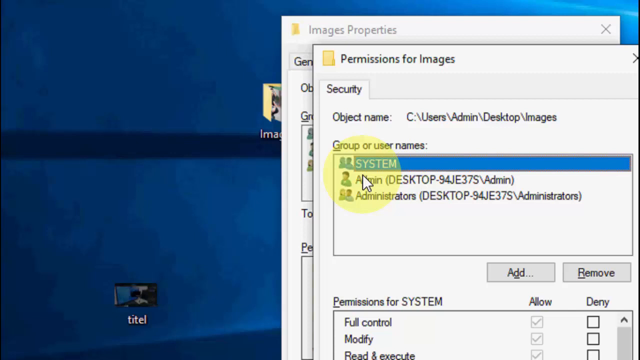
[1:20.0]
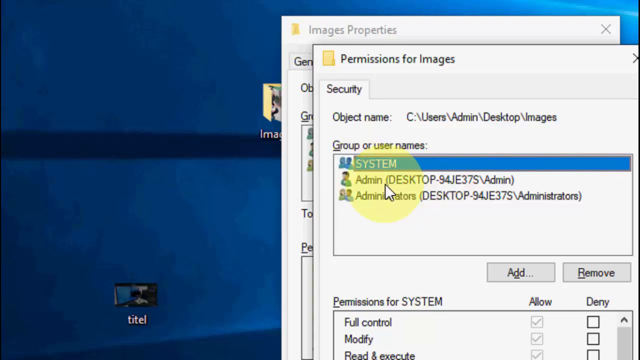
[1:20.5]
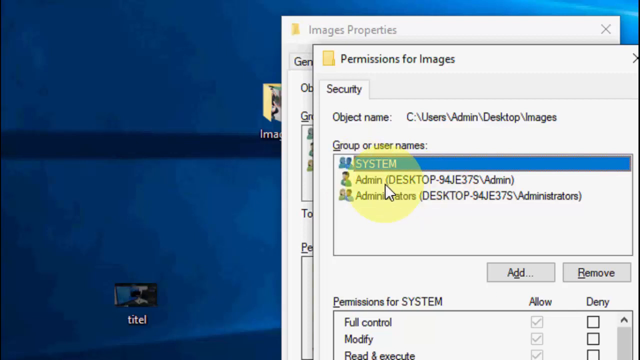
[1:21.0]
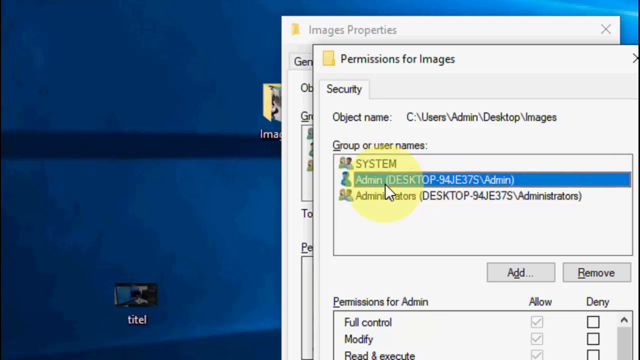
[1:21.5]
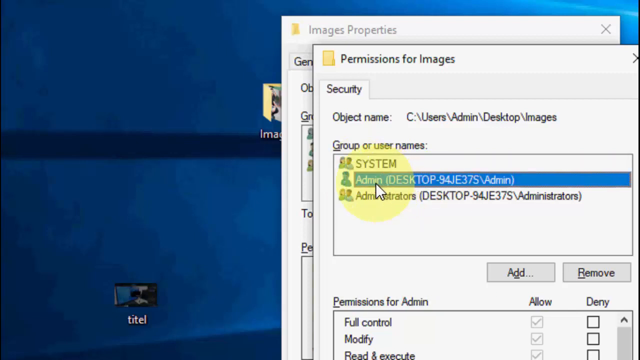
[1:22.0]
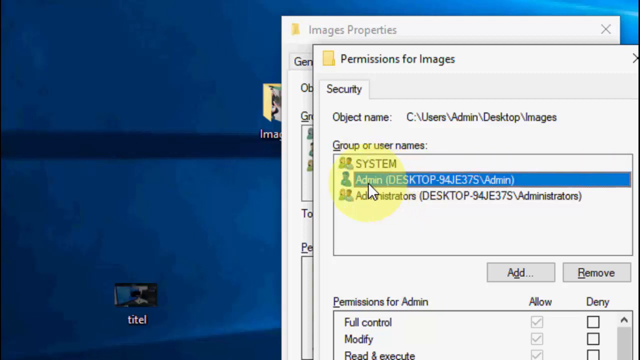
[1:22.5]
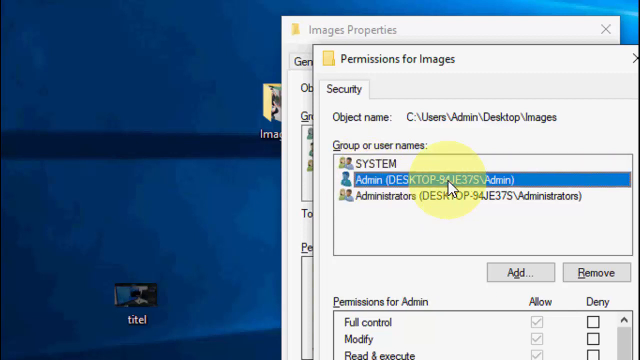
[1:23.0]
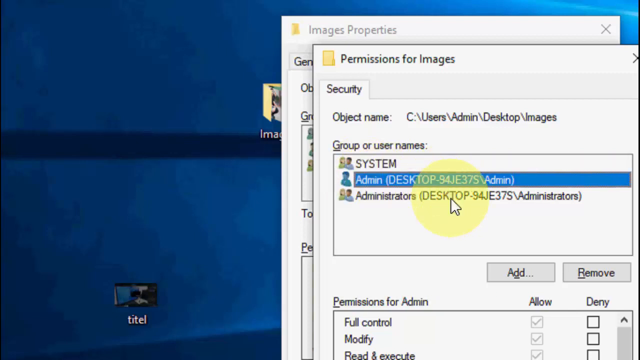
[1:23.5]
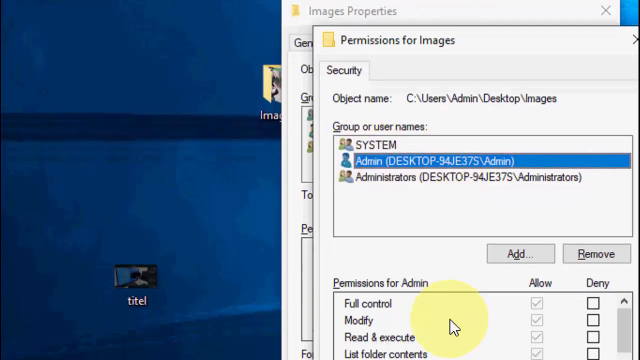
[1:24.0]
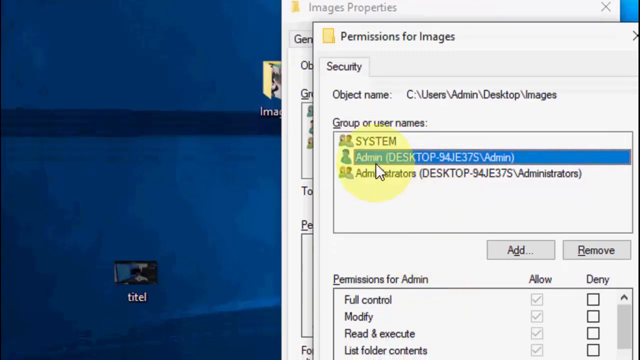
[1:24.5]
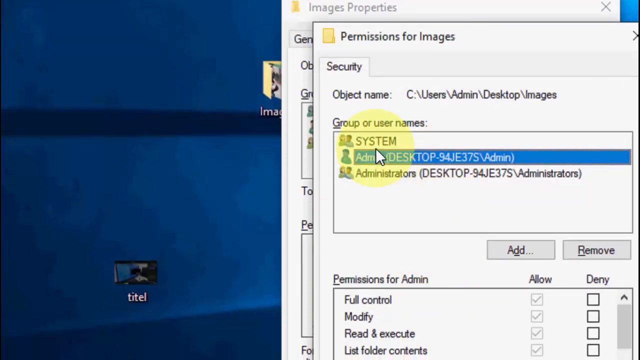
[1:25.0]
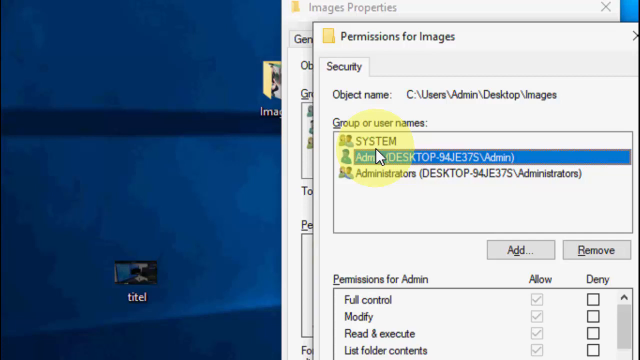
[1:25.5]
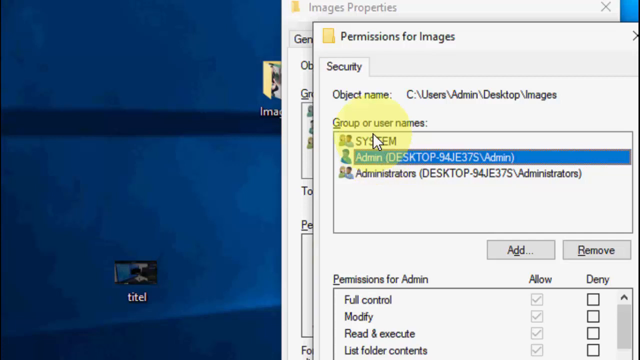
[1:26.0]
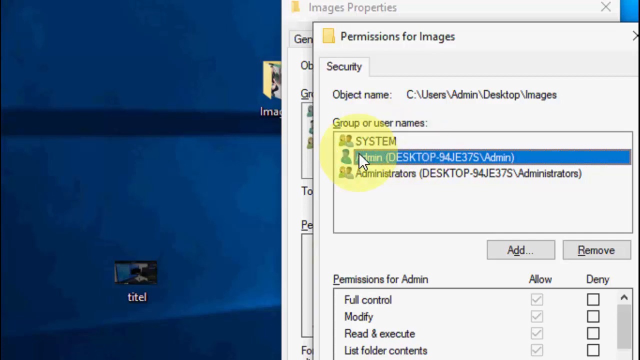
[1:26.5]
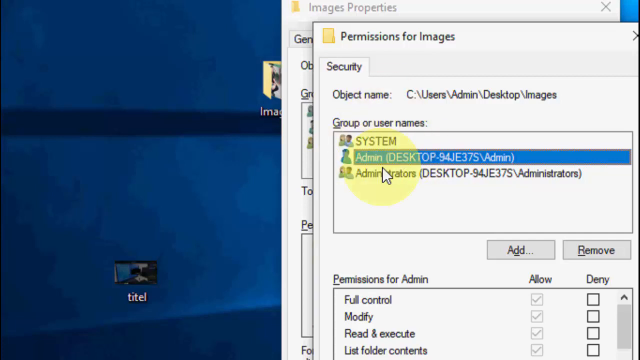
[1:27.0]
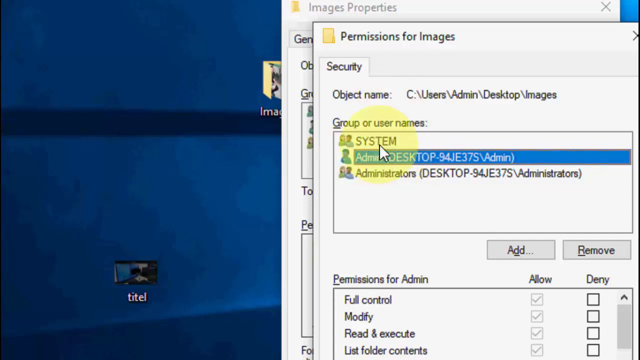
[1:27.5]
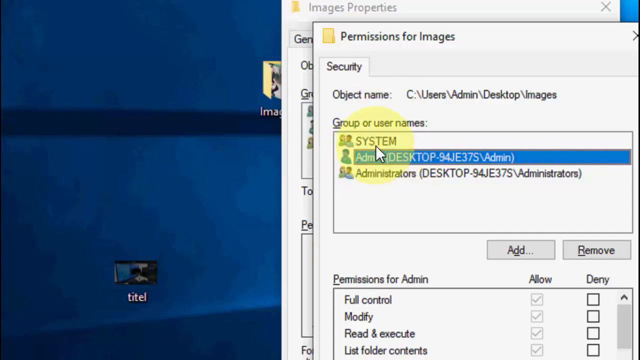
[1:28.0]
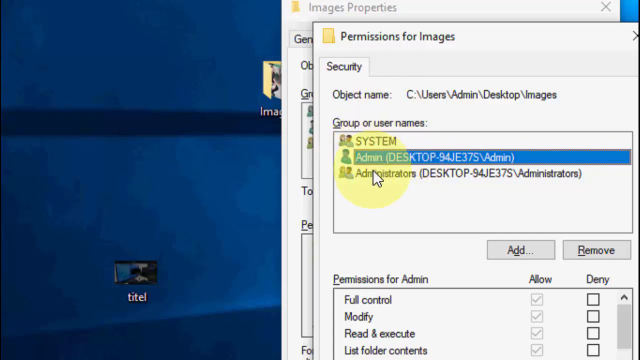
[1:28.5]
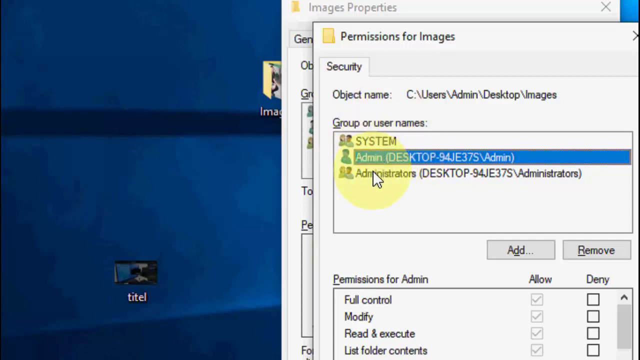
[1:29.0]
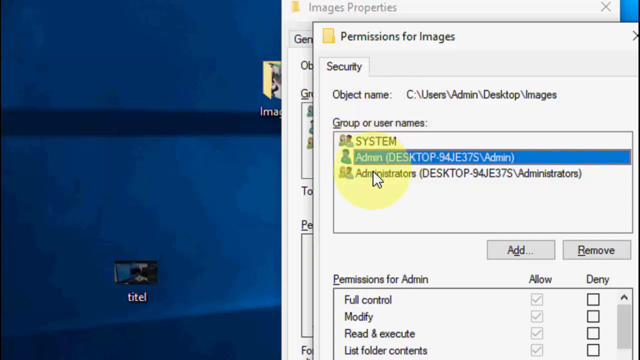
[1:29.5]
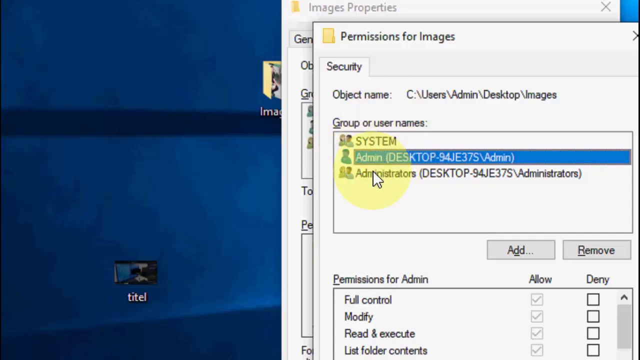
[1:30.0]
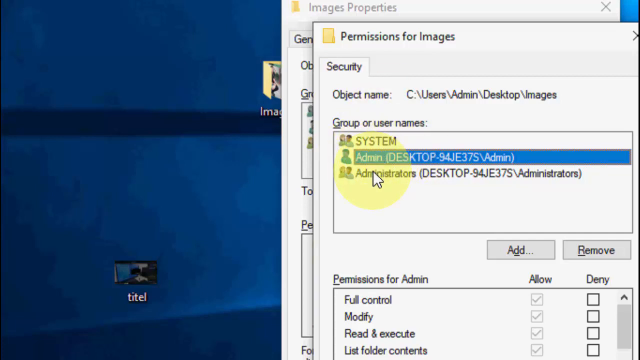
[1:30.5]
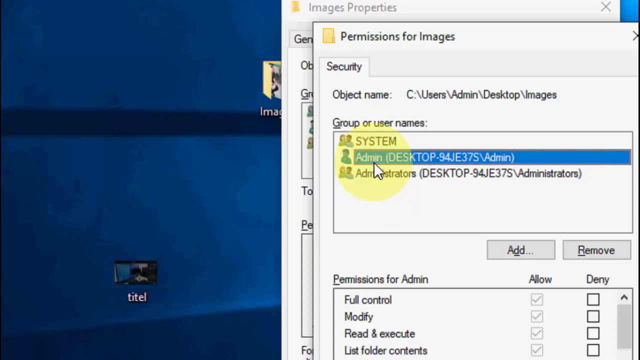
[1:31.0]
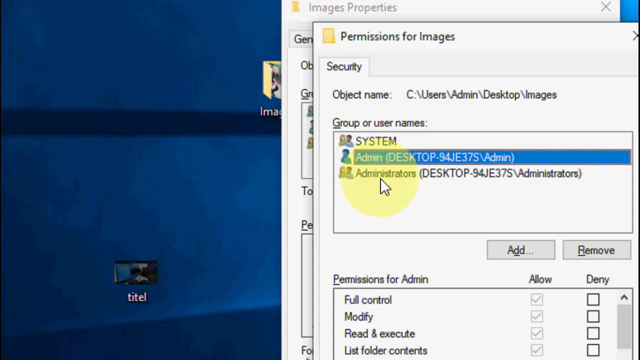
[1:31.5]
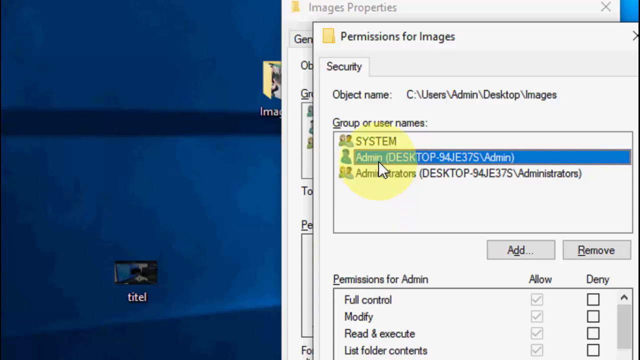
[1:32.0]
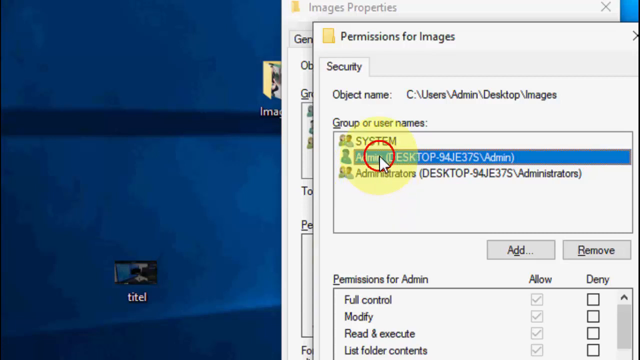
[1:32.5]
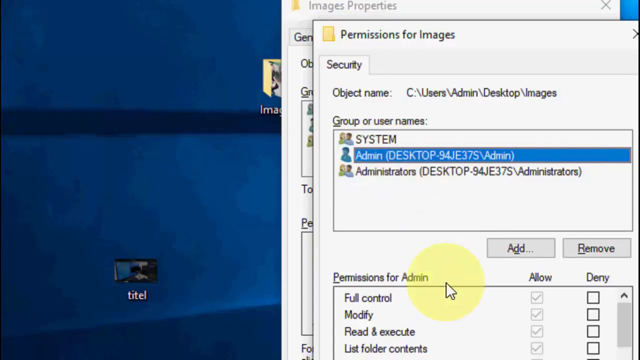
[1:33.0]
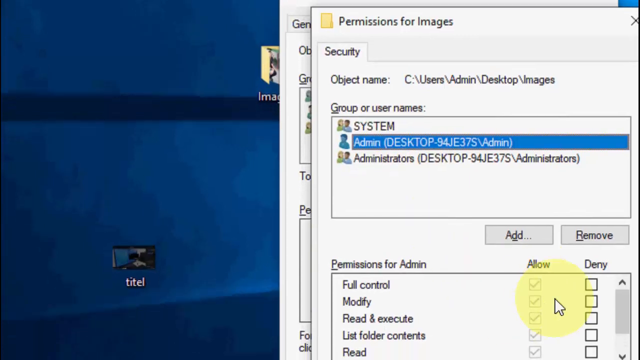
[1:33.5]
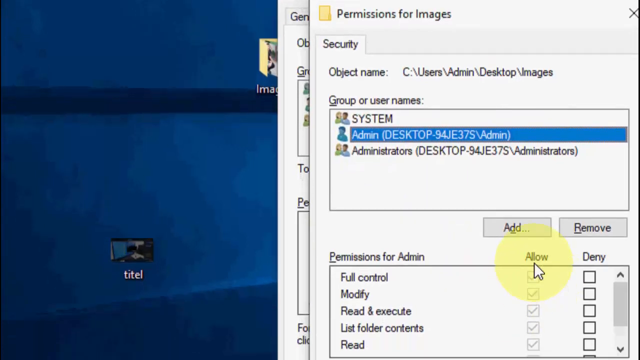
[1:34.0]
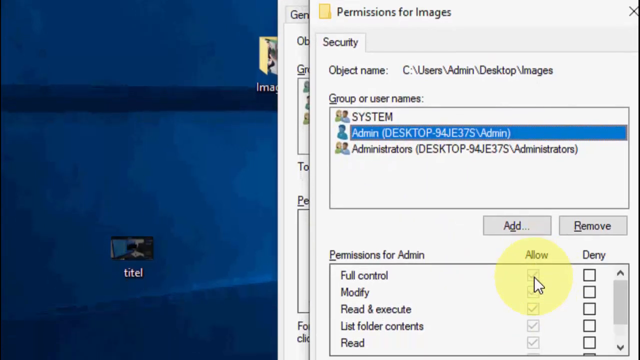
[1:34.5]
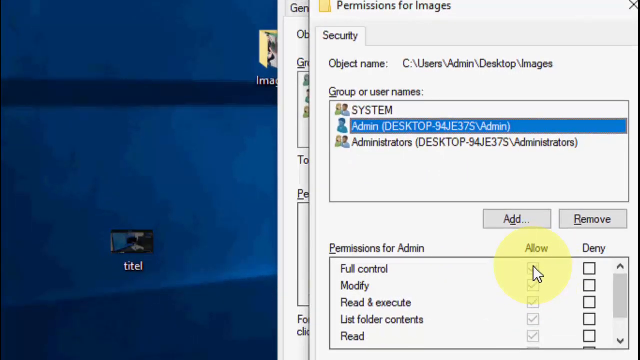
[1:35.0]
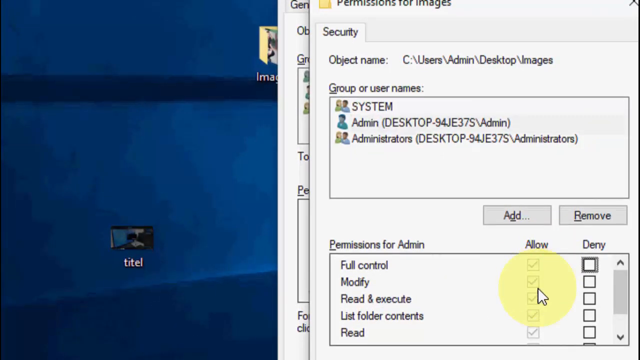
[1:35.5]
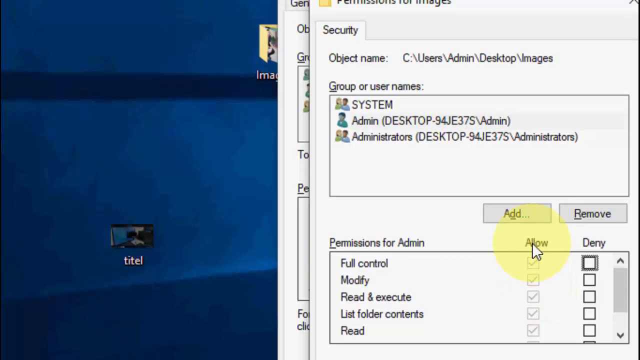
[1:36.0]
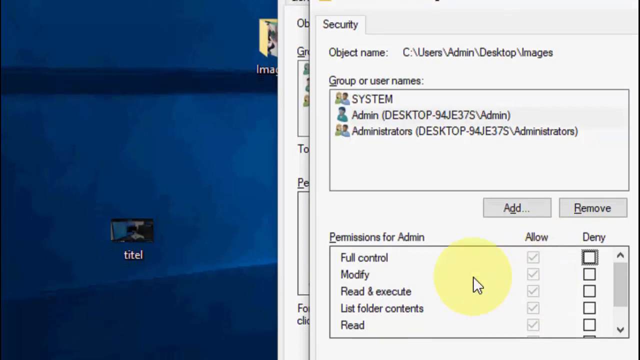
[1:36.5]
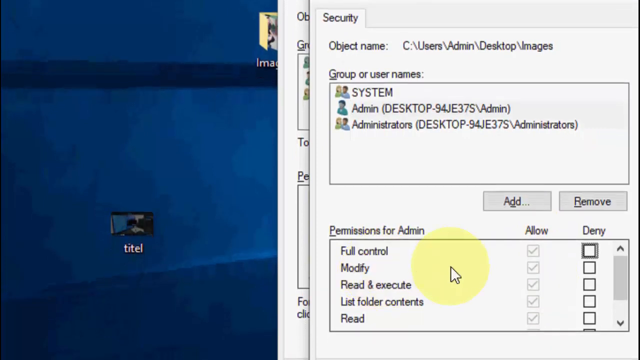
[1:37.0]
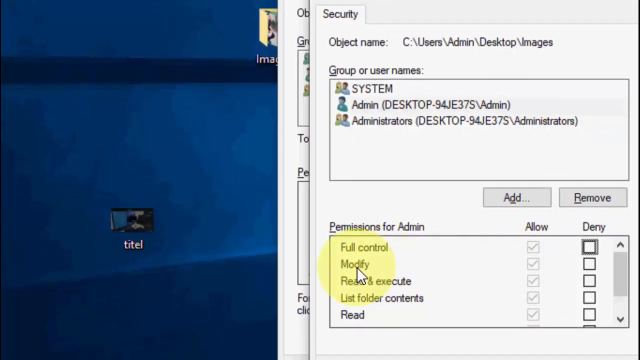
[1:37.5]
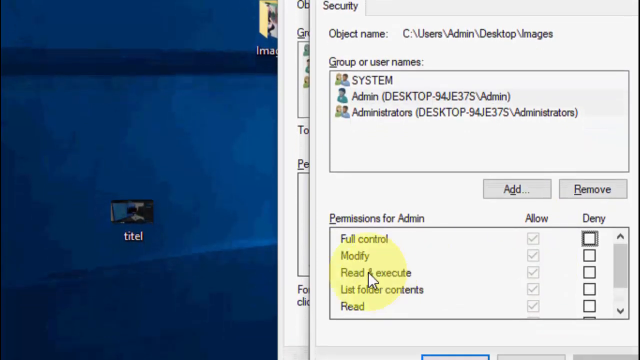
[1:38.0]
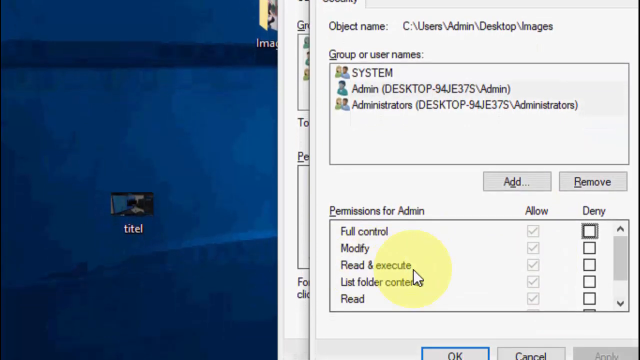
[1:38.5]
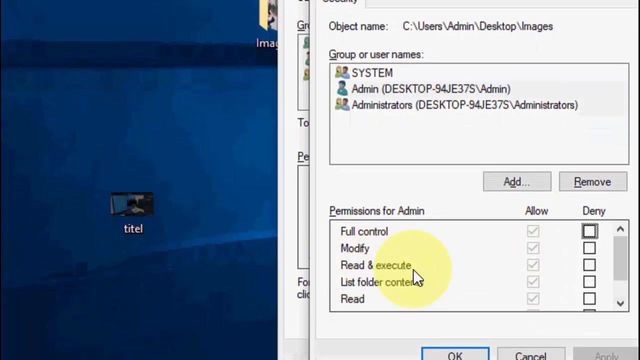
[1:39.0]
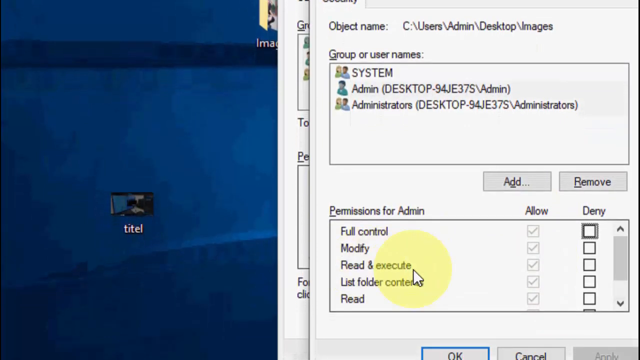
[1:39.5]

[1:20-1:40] After the edit button is clicked, the three group or user names are shown: system, admin and administrators. The user clicks on admin and scrolls down to the permission checkboxes, which are all checked under allow, including full control, modify, read and execute, and read. A deny column on the right side has empty boxes. Above the admin permissions are two buttons to add or remove a group. Two windows are open: the image properties window and the permissions window for the image. The user scrolls down to the permissions for system, where only allow permissions are checked, with a deny checkbox also present.